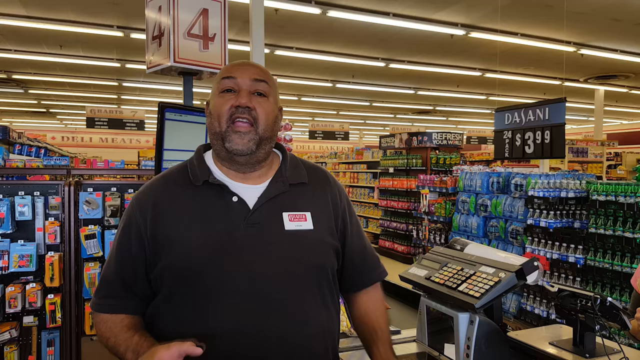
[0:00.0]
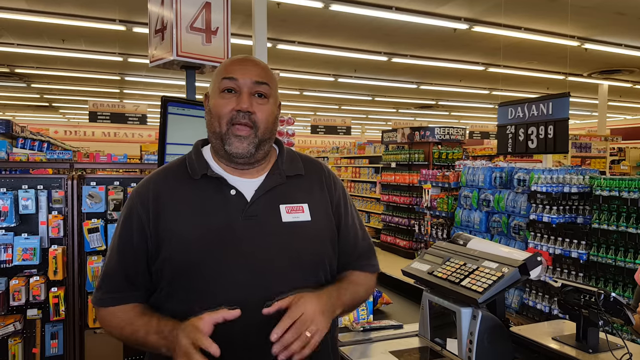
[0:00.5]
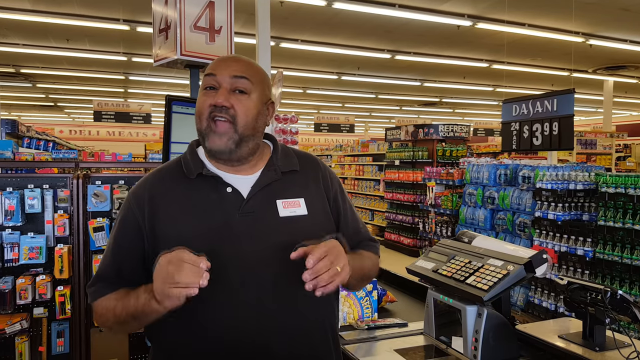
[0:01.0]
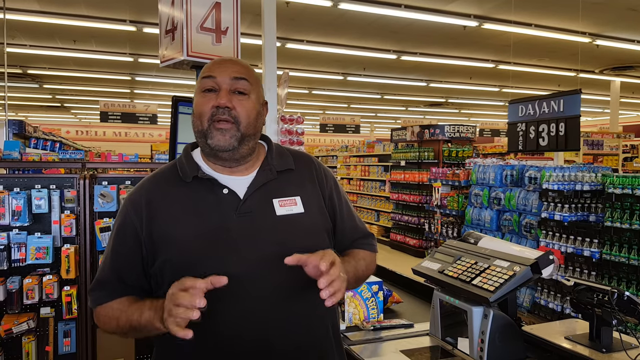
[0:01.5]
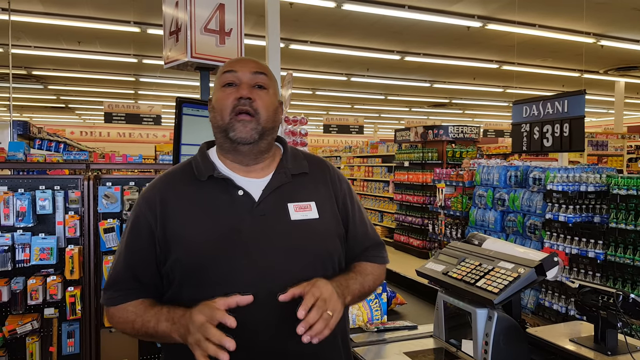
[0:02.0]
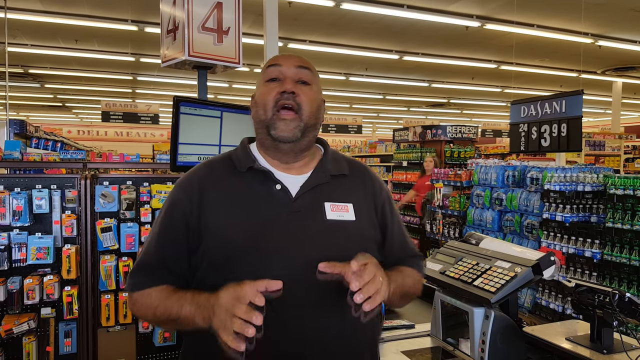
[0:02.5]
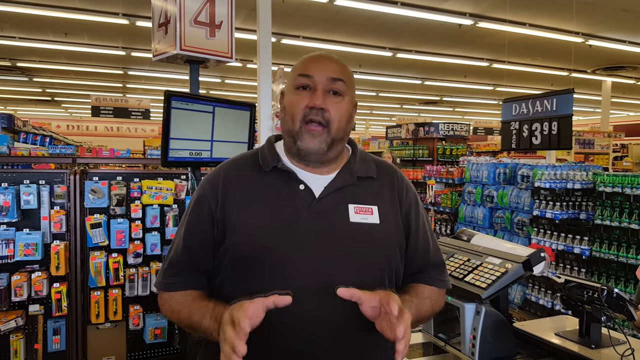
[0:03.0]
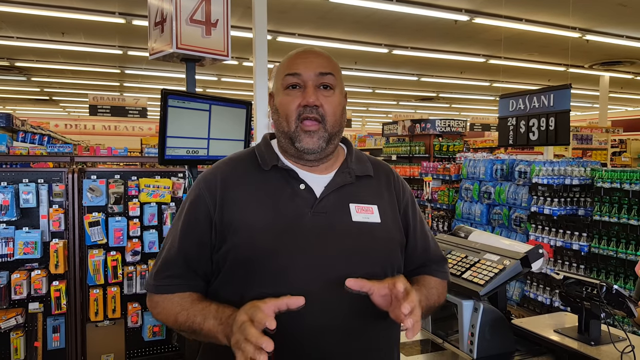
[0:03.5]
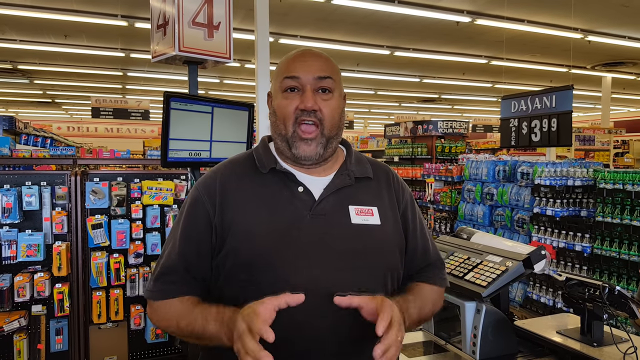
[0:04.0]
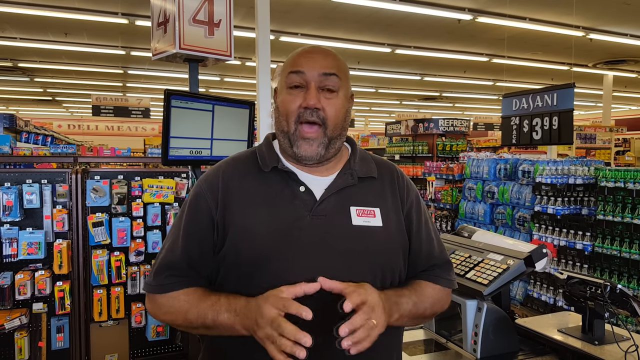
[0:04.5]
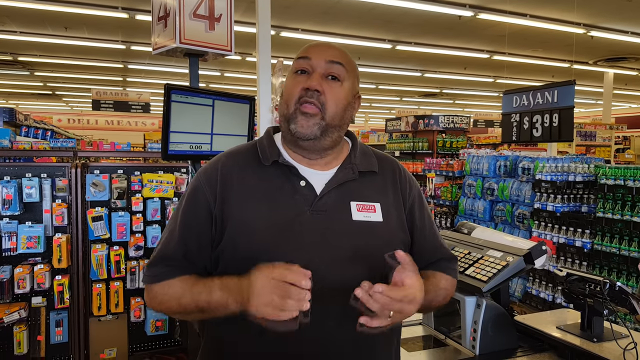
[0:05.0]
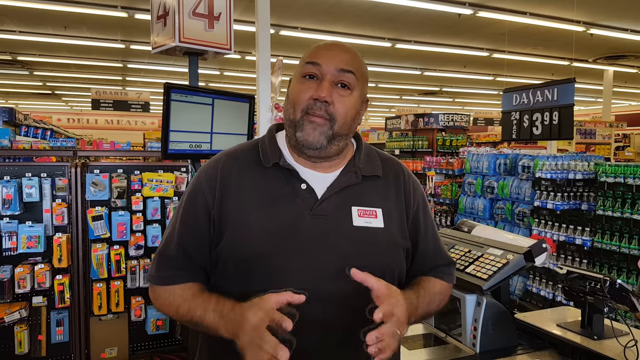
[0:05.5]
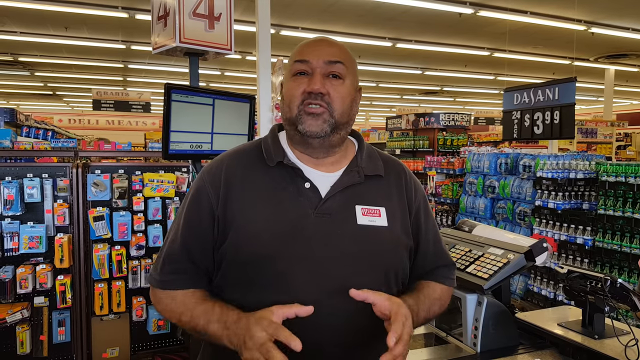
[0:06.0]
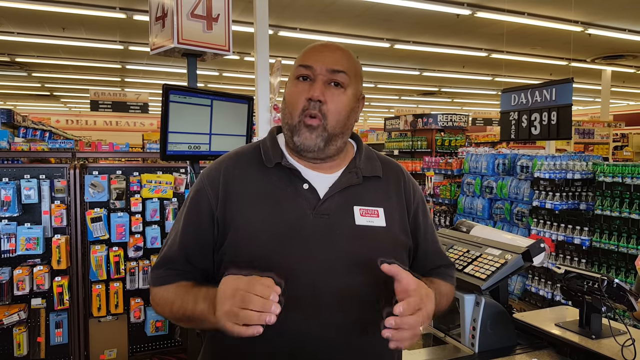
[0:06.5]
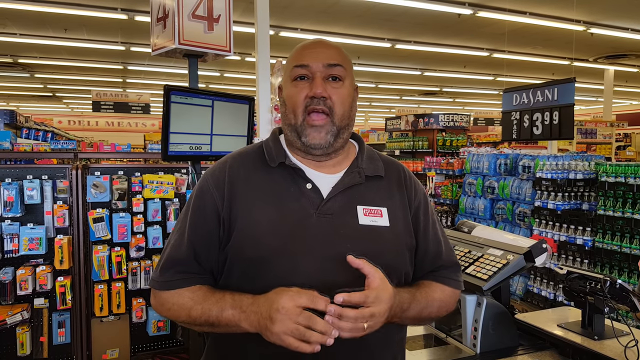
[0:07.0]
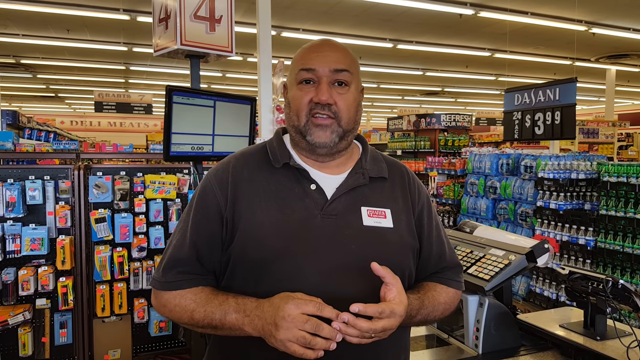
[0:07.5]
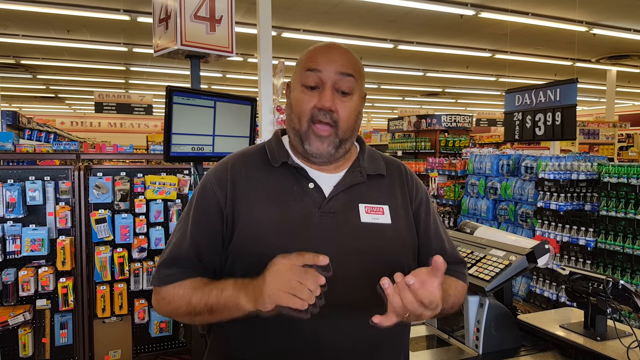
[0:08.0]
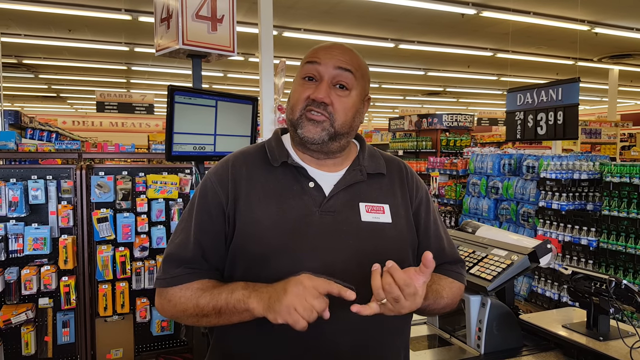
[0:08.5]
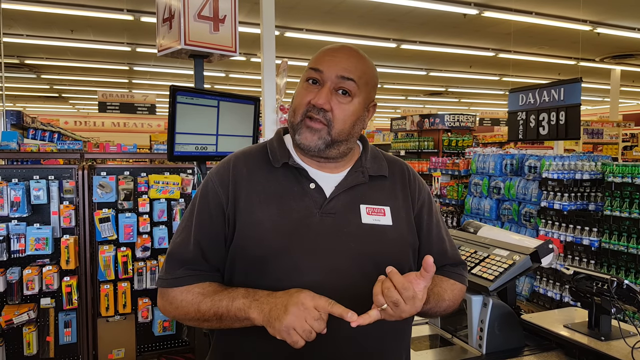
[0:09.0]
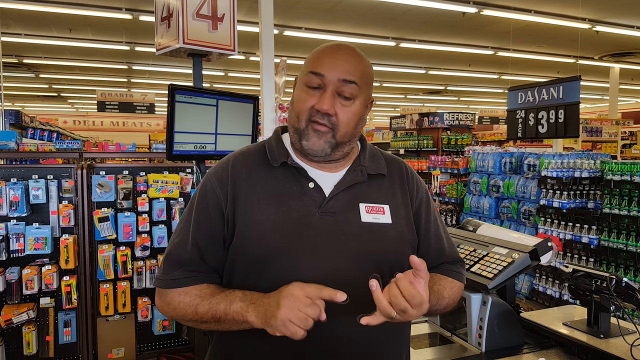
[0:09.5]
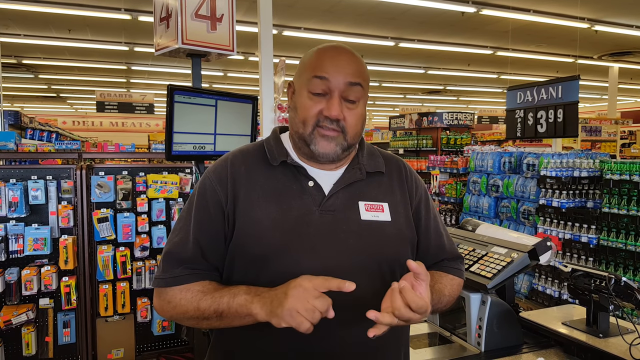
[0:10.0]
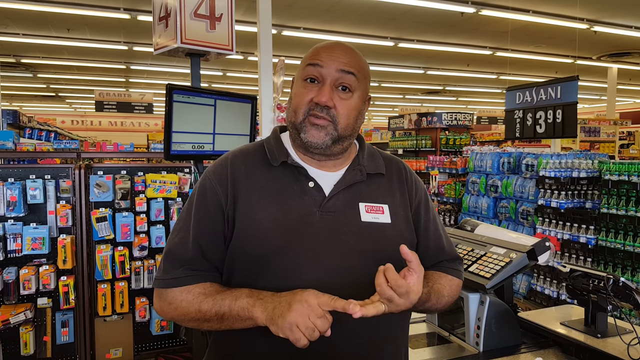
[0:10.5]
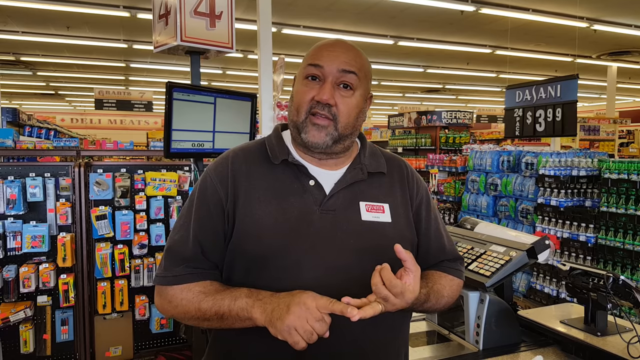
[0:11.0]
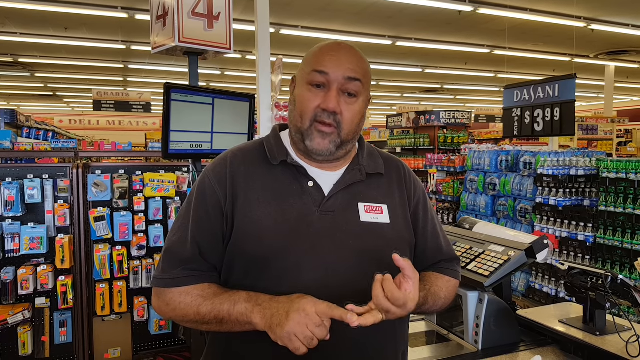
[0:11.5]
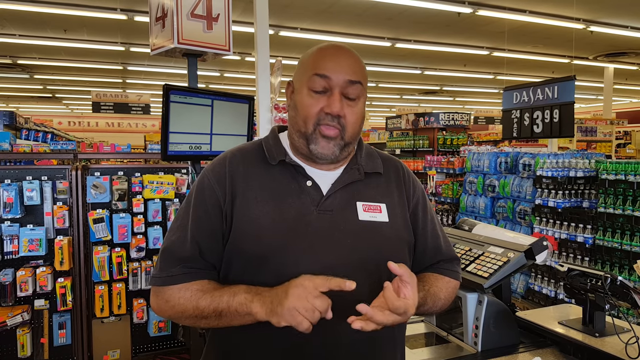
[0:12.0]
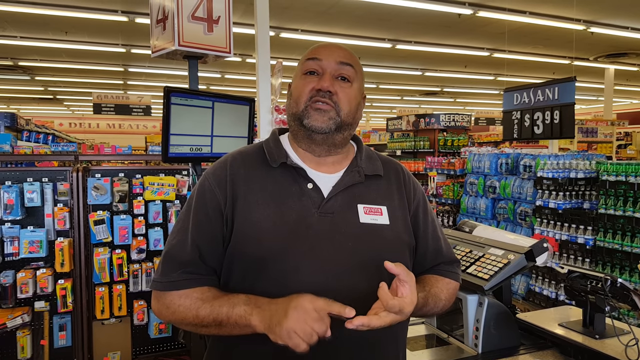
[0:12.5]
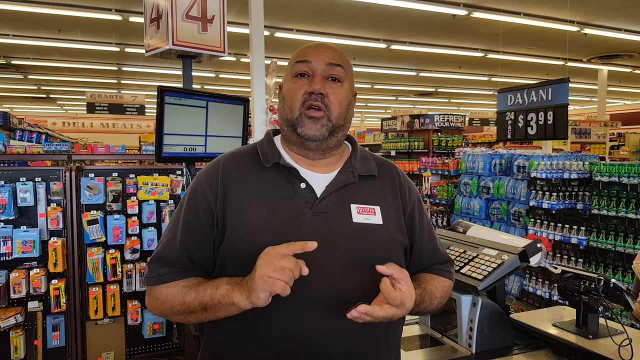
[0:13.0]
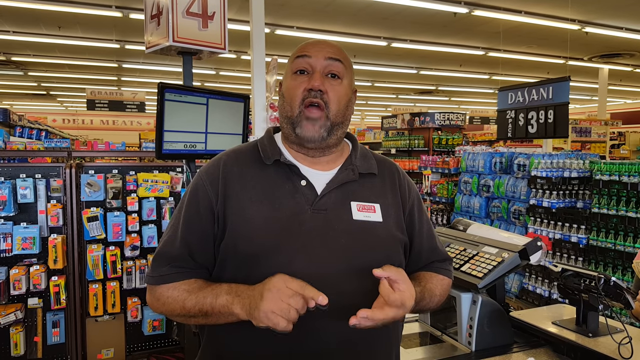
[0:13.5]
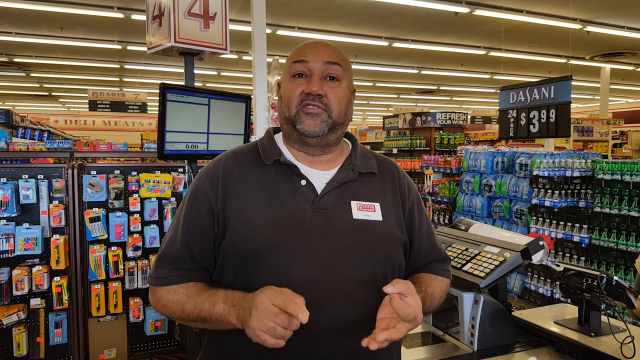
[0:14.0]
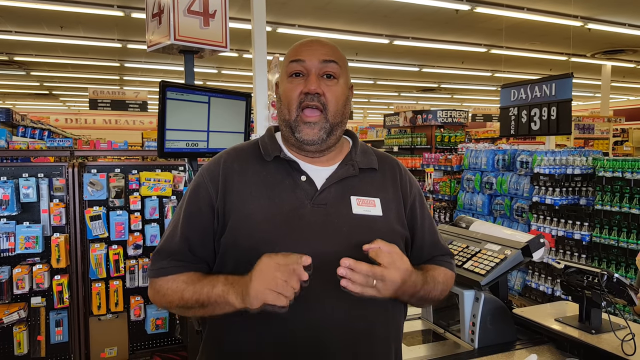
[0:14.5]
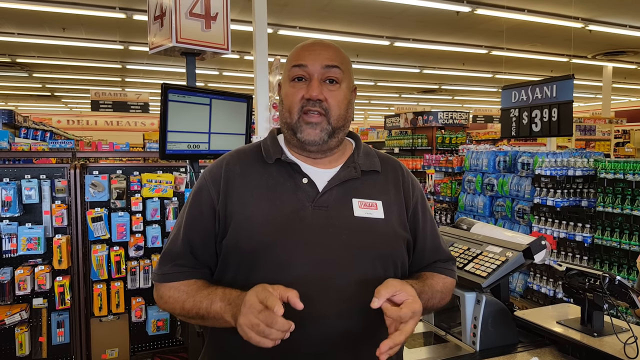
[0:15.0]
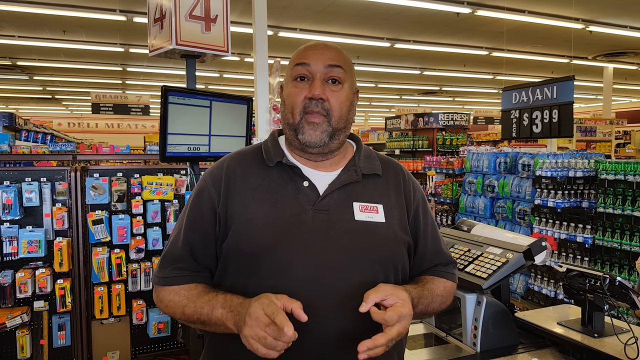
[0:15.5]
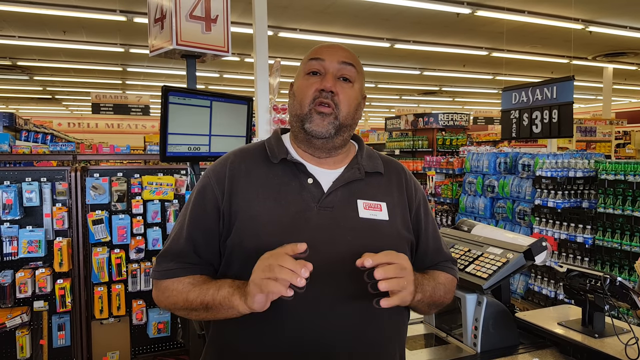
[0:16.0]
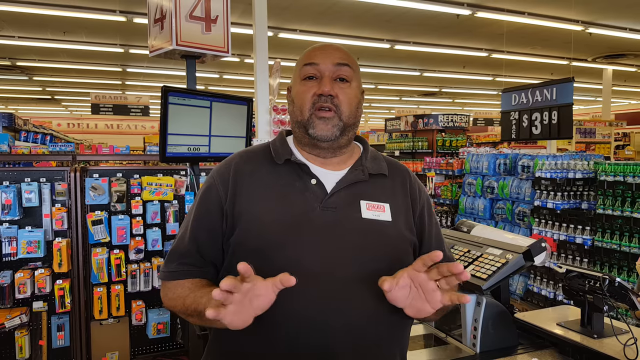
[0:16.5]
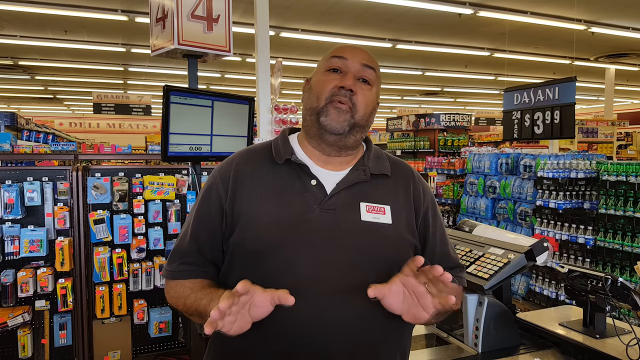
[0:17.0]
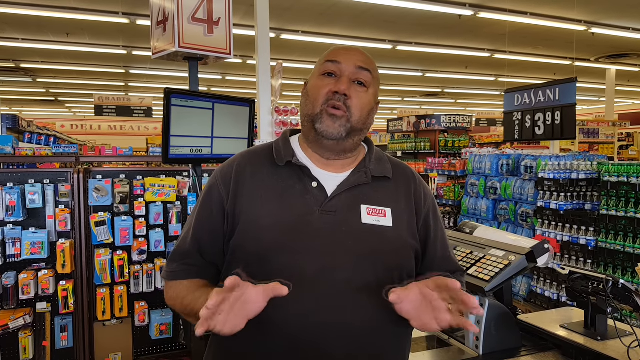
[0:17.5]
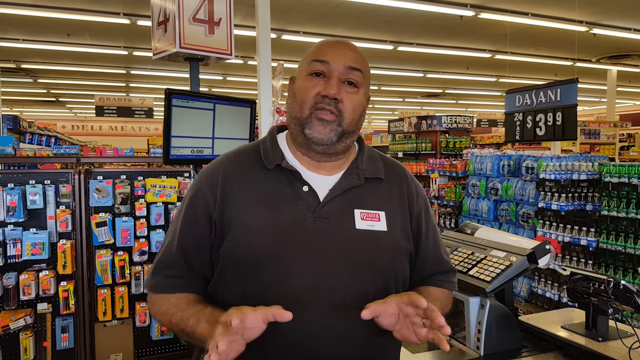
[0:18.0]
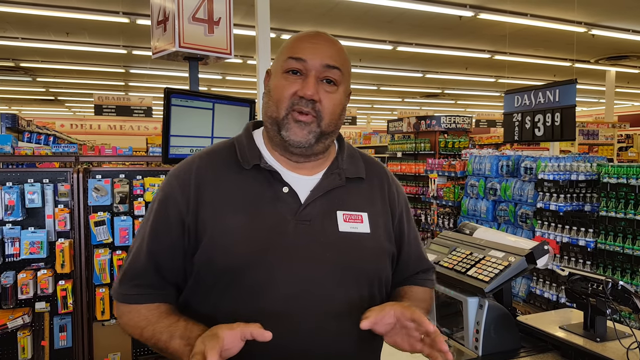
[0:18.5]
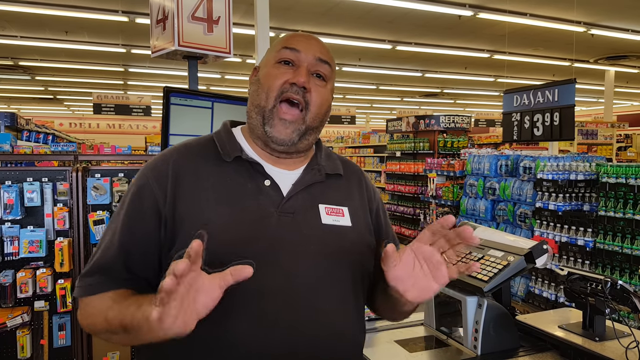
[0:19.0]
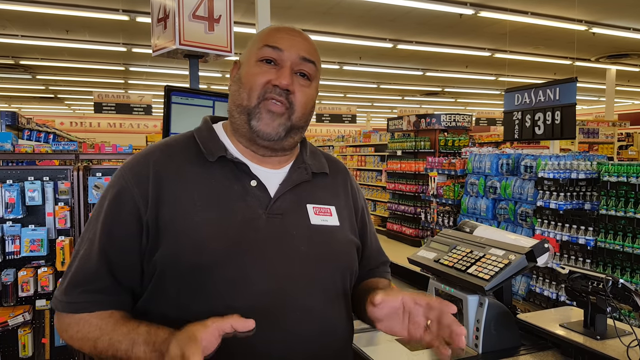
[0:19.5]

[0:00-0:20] A grocery clerk, a man working as a cashier, stands in the center of the frame, talking with his hands held outward. He wears what looks like a faded black polo shirt with a white undershirt beneath it. He is bald, with no hair on his head but a lot of facial hair. He is explaining a number of different things, which shows in his hand gestures as he counts, and he looks directly at the camera as he speaks. Behind him is the grocery store: on the right are packages of bottled water and various other beverages, and the store's aisles are visible in the distance. He stands inside a small cashier cubicle, with a monitor screen behind him. The check stand is number four, and the number four is visible at the top left behind him.